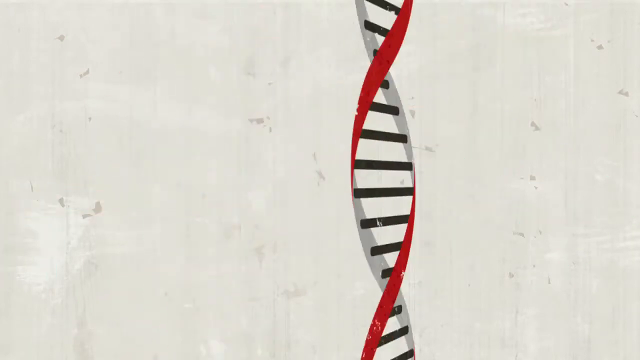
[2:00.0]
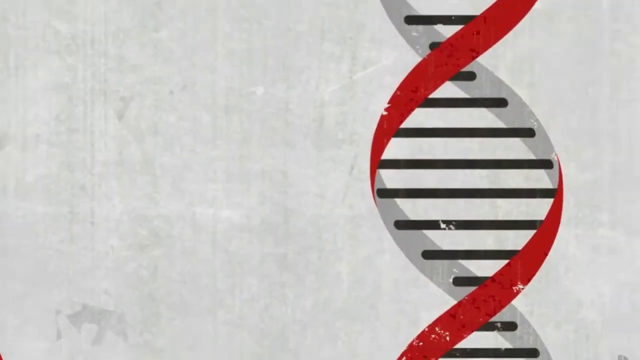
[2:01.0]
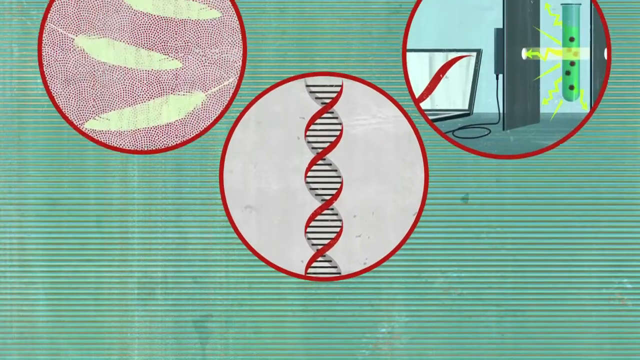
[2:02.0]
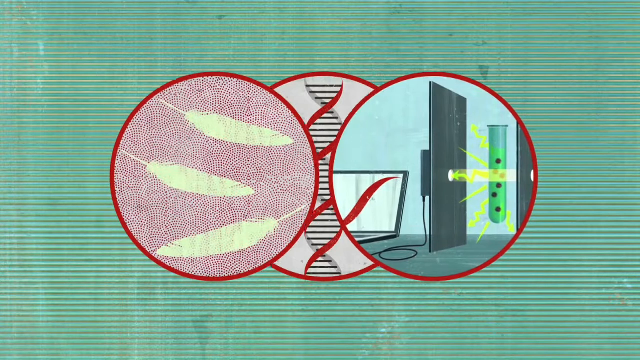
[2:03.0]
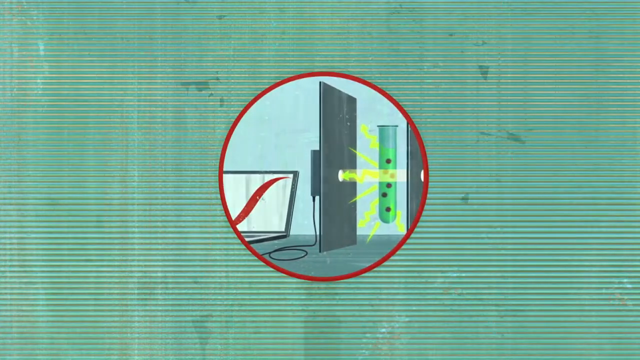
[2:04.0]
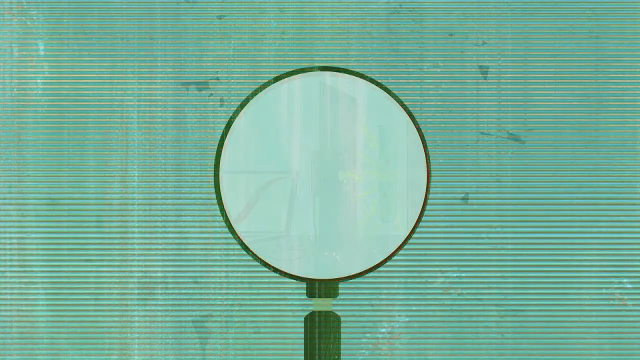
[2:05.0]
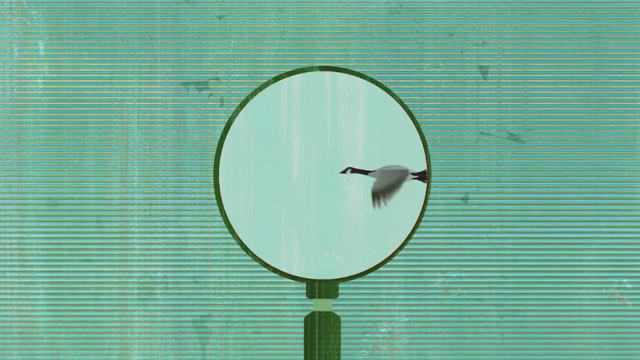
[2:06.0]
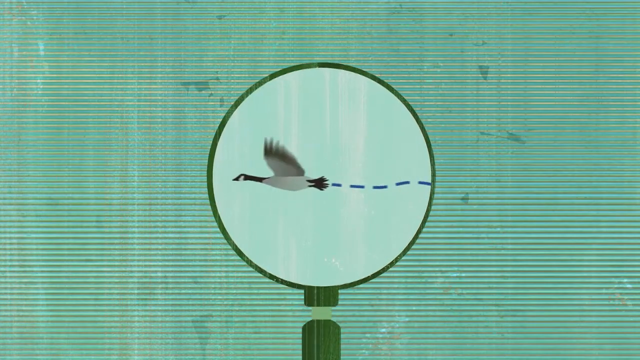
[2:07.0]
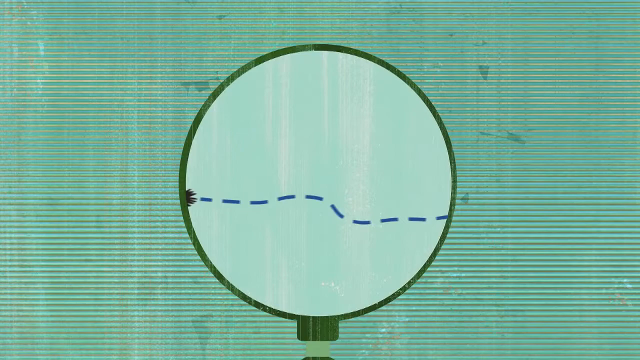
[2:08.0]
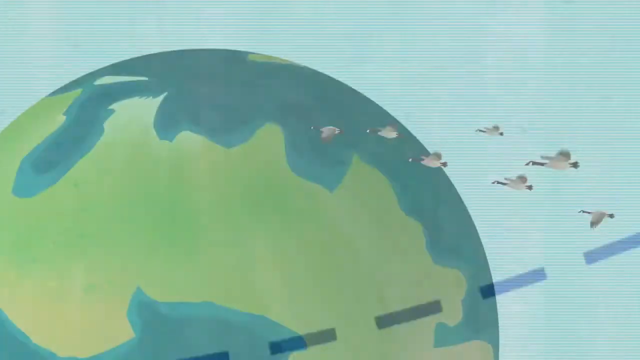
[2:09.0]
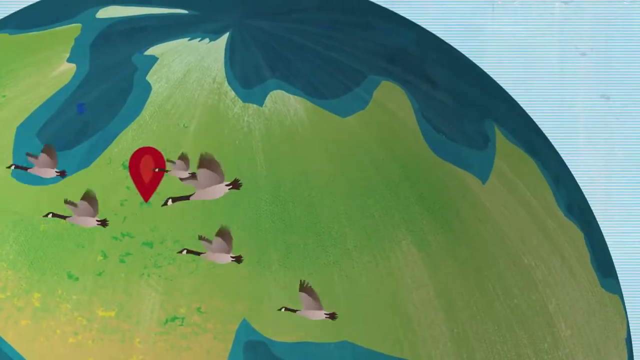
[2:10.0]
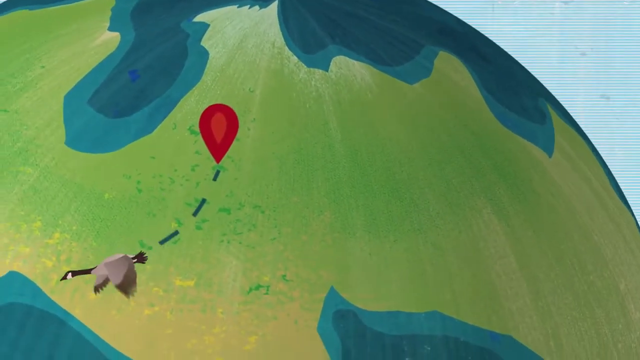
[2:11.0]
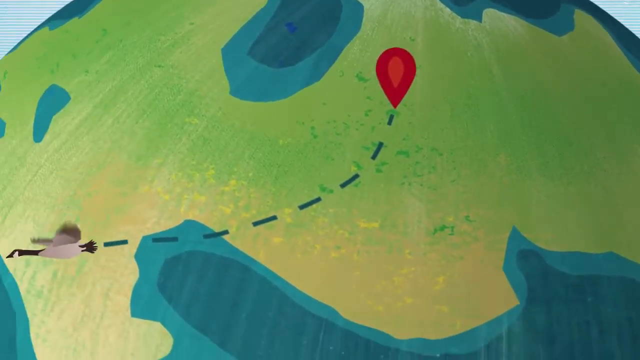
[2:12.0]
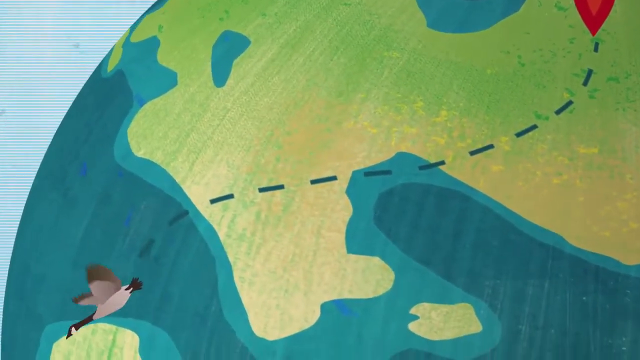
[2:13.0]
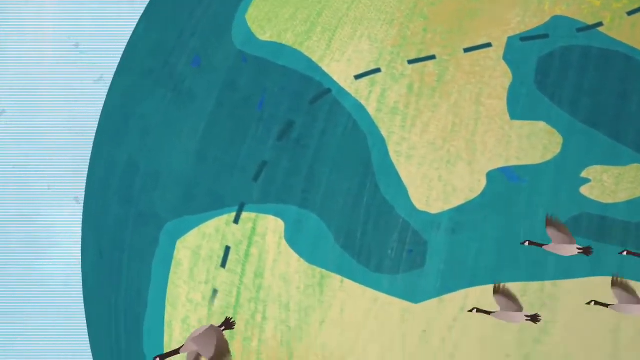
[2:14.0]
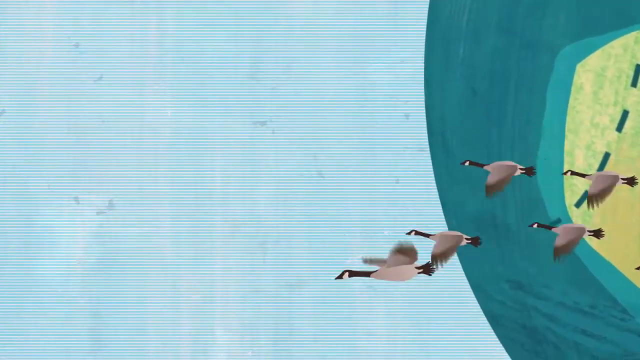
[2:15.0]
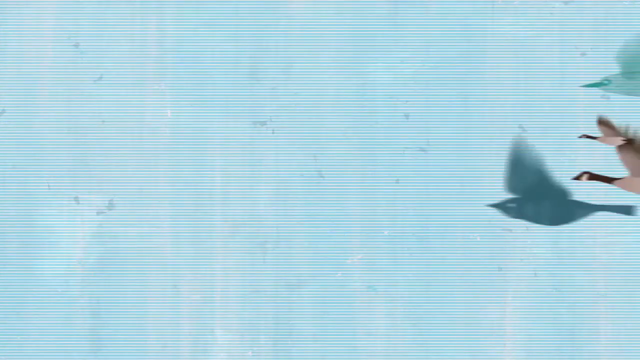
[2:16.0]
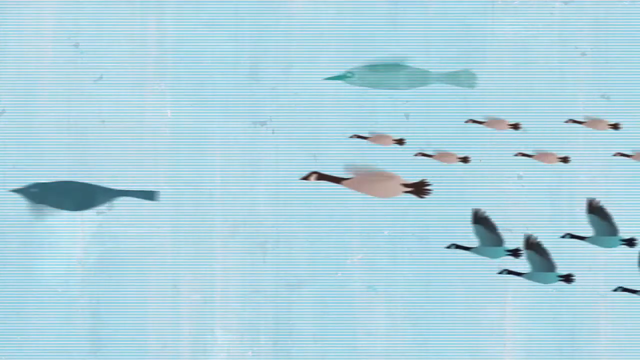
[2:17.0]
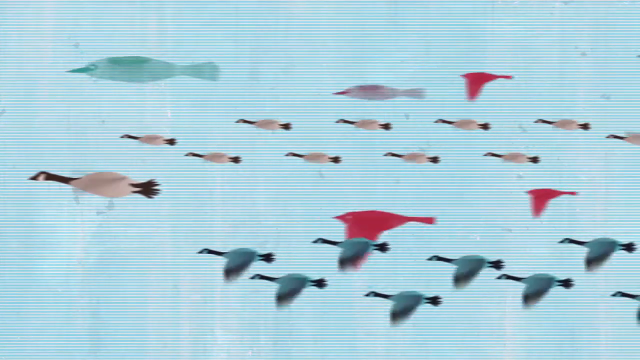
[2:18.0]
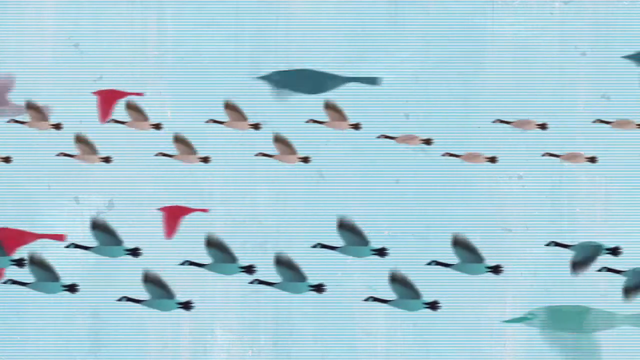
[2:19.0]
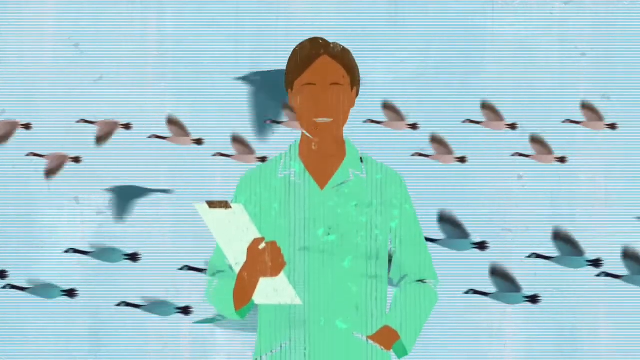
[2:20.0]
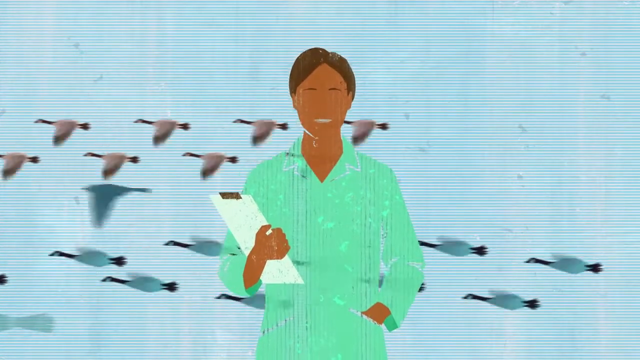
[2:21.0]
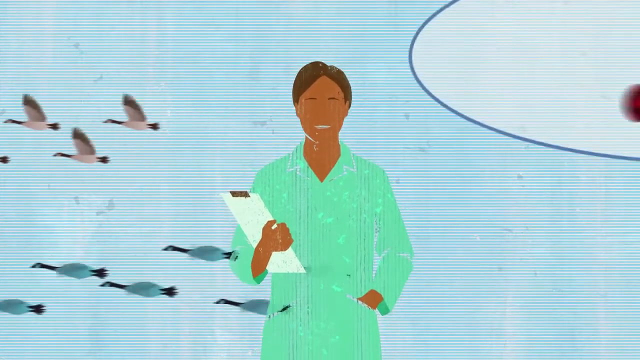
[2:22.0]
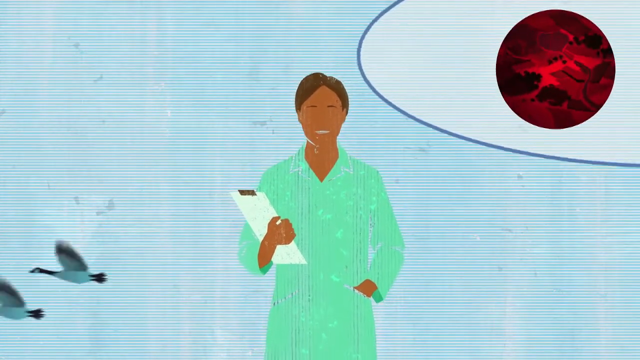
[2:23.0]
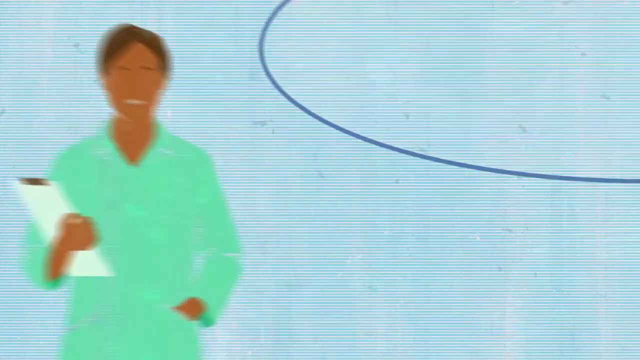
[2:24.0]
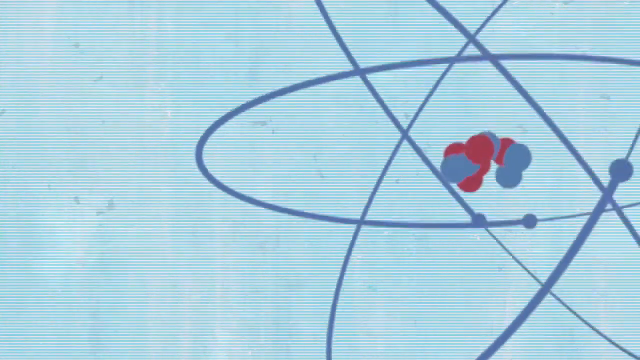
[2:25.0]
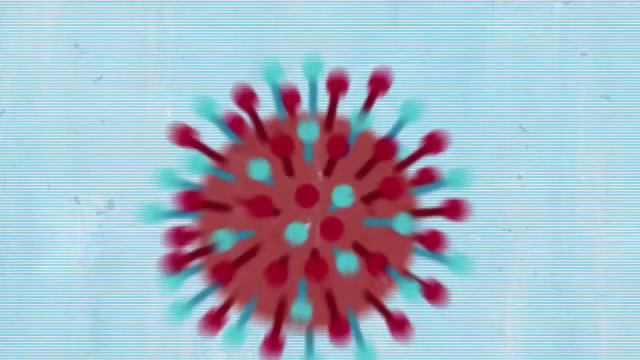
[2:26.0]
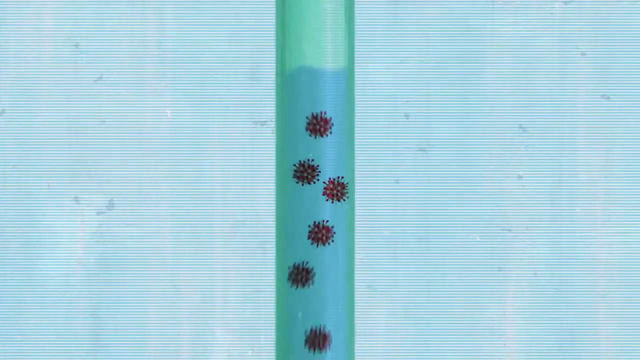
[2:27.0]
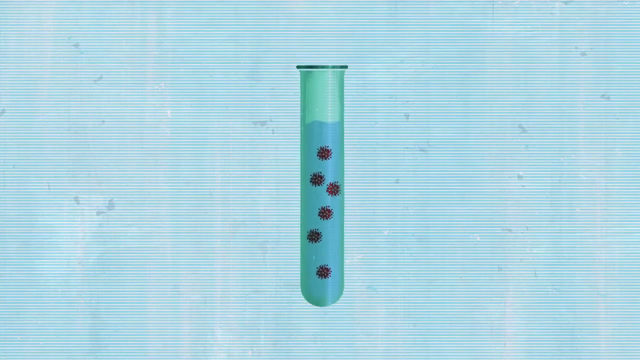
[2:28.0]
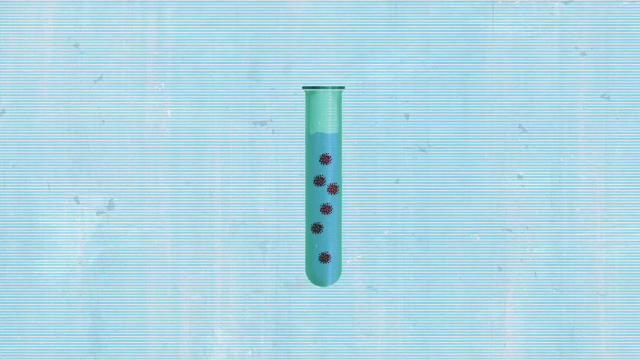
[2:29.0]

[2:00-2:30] The DNA strand is shown, and the view zooms out a bit as the strand goes inside a circle outlined in red. Two other circles join it, interlocked almost like the Olympic rings, with three circles side by side touching each other. On the left are the three yellow feathers with the red dots in the background, in the middle is the DNA helix, and on the right is the picture of the beaker with the light shining through and the computers. The circles merge into one circle, with the beaker and computer as the focus. That picture disappears, and a goose flies by with blue dotted lines behind it showing its flying pattern. A red location pin is dropped on the Earth, and from the pin blue hashed lines follow the goose's flight. The goose joins the whole flock, and several more geese join, including brown, bluish and red geese. The doctor seen earlier appears on the screen in a greenish coat, holding the white clipboard; she is almost transparent, and the geese are still visible flying in the background behind her. The atom is then shown spinning. A close-up shows the beaker with six red viruses and blue liquid inside a greenish container. The color of the liquid or the beaker changes to green as a yellow light shines on it.